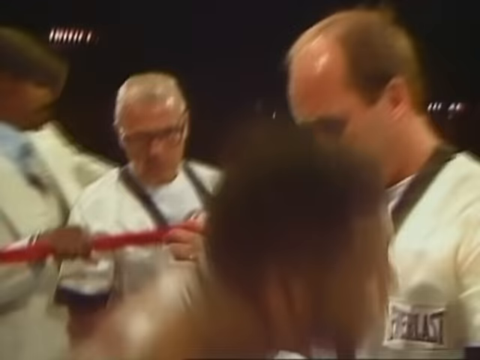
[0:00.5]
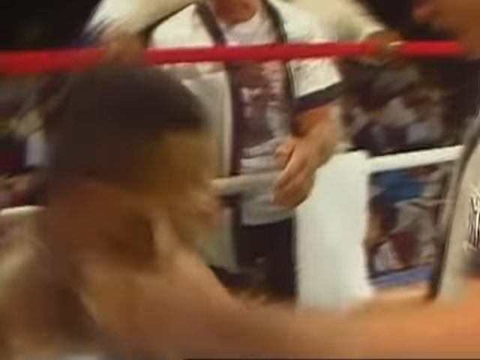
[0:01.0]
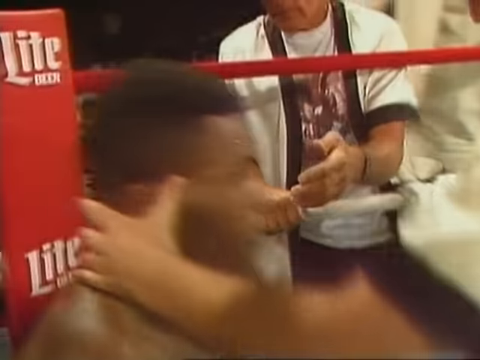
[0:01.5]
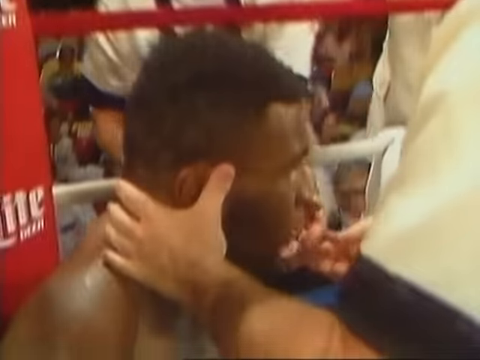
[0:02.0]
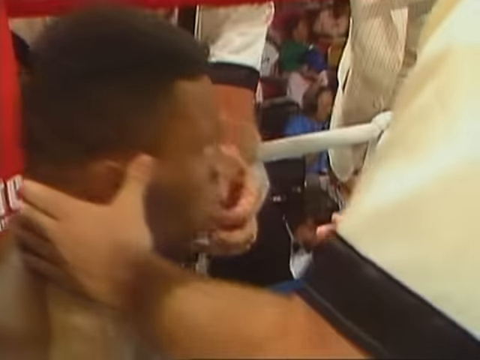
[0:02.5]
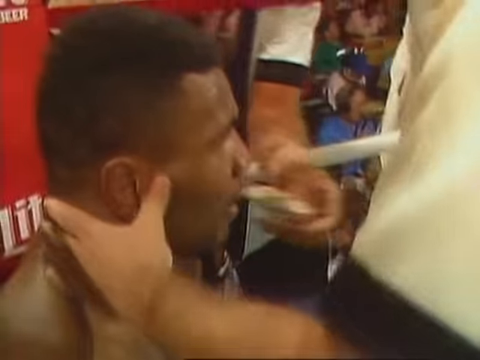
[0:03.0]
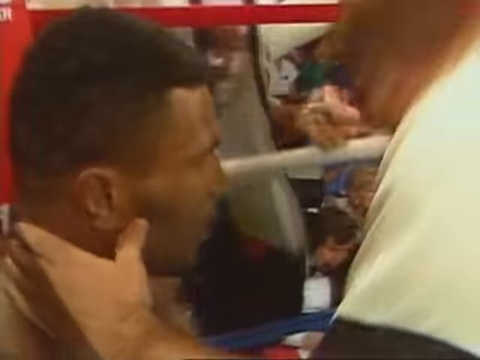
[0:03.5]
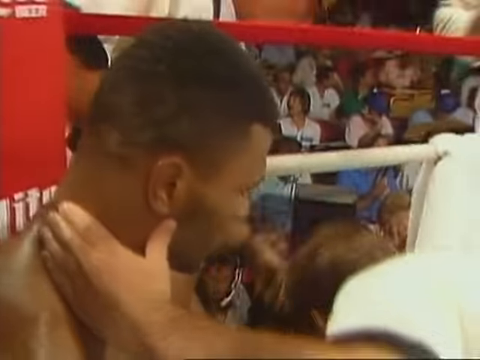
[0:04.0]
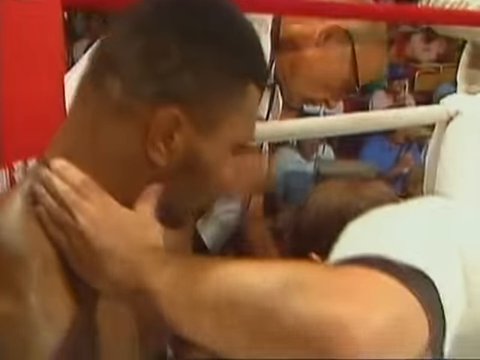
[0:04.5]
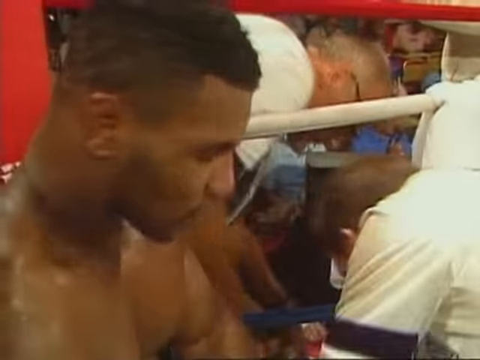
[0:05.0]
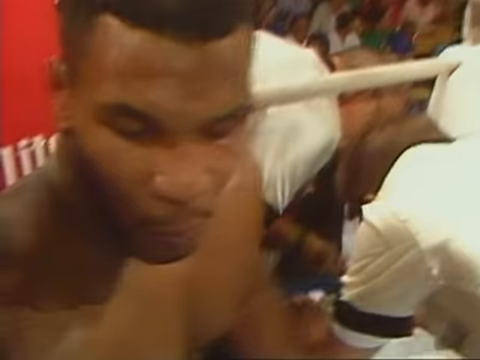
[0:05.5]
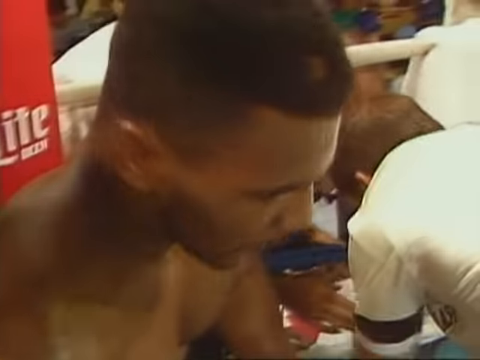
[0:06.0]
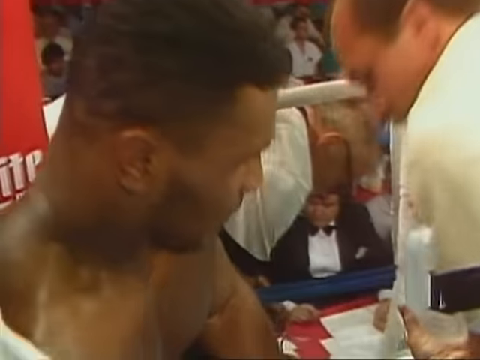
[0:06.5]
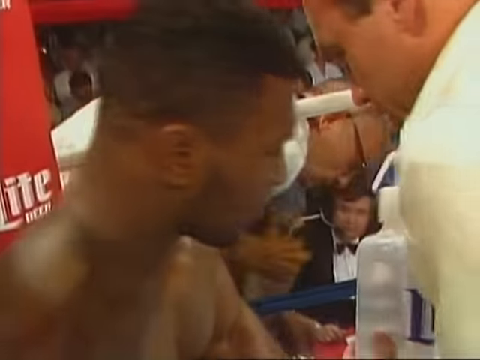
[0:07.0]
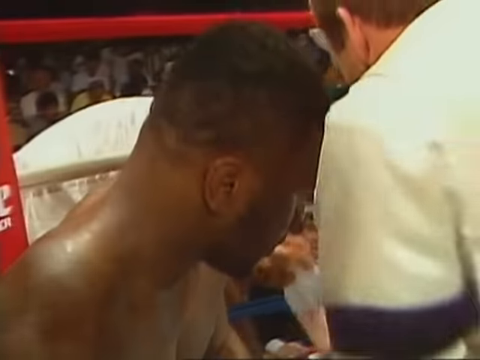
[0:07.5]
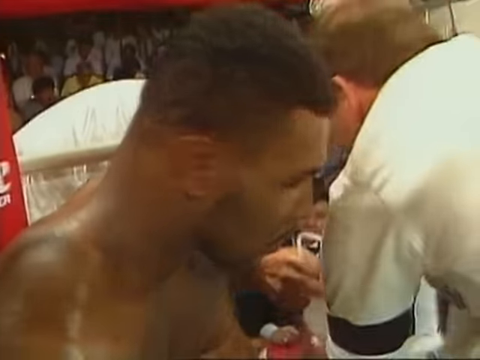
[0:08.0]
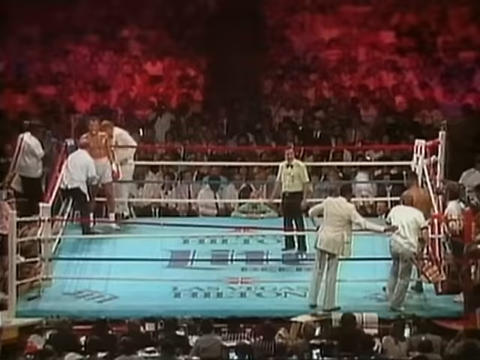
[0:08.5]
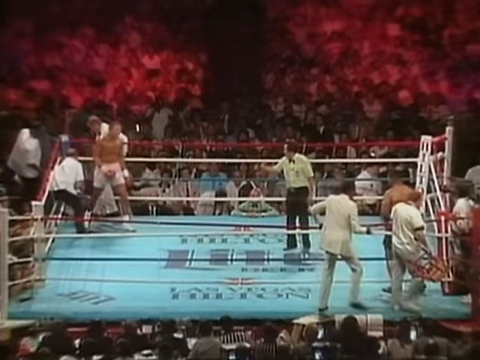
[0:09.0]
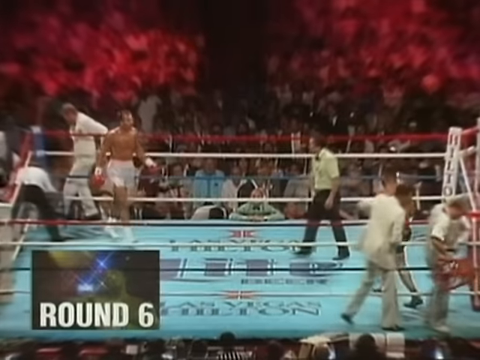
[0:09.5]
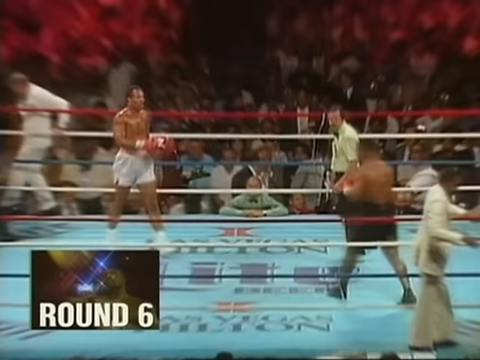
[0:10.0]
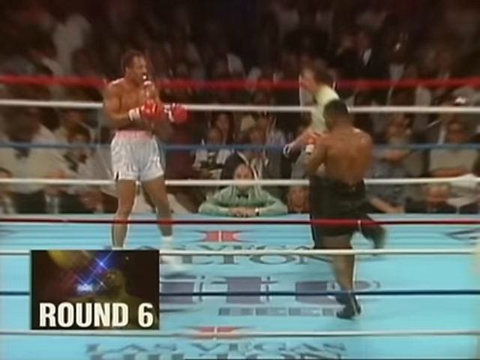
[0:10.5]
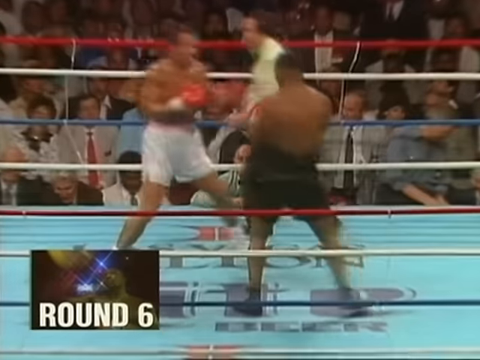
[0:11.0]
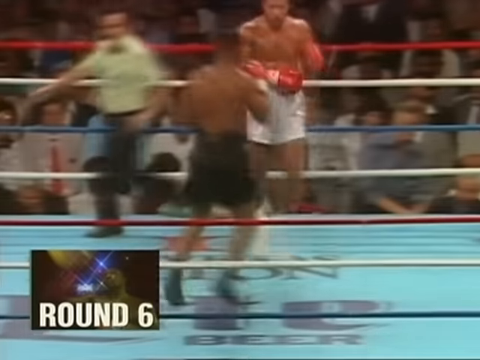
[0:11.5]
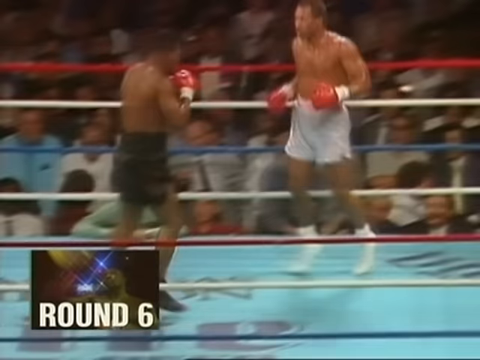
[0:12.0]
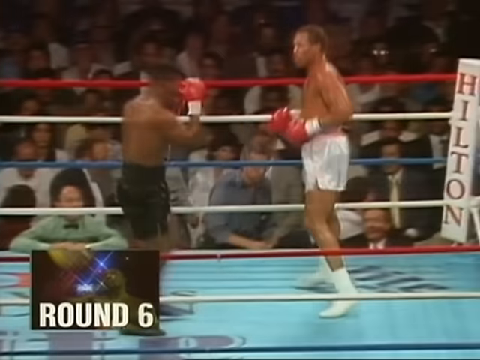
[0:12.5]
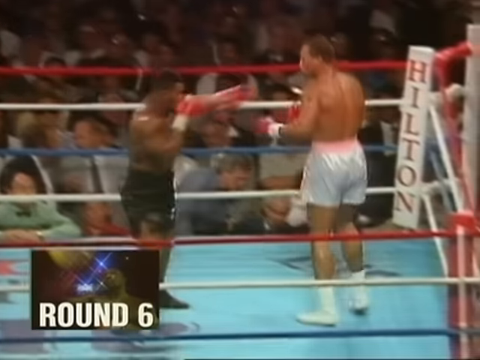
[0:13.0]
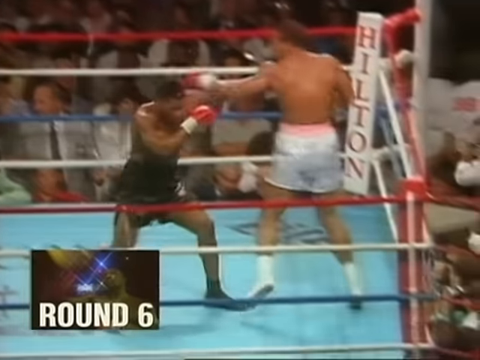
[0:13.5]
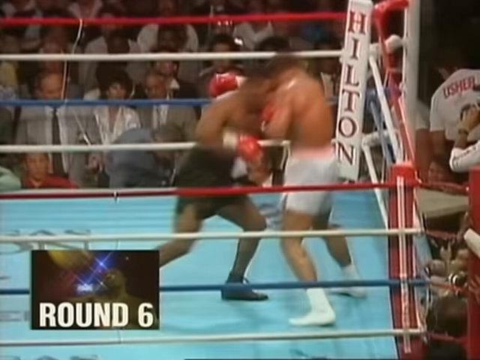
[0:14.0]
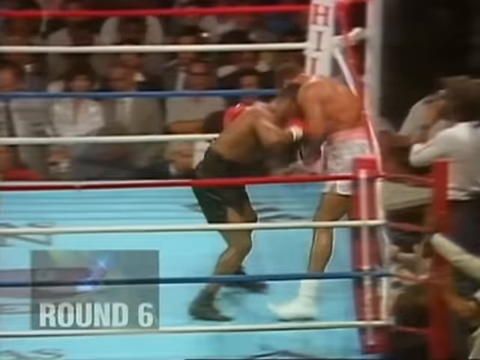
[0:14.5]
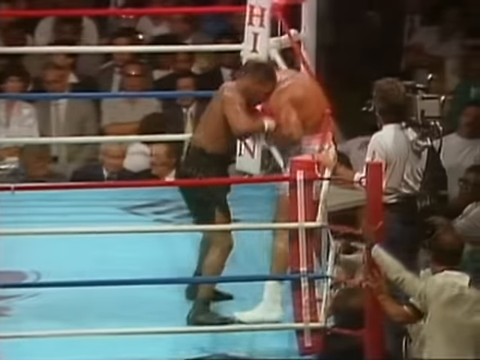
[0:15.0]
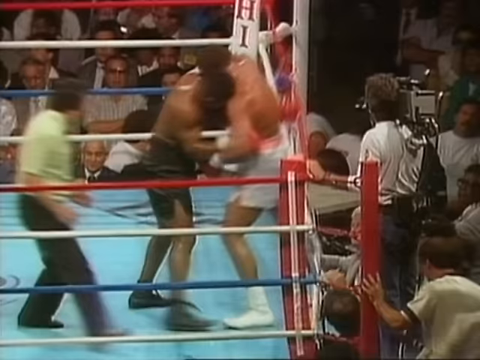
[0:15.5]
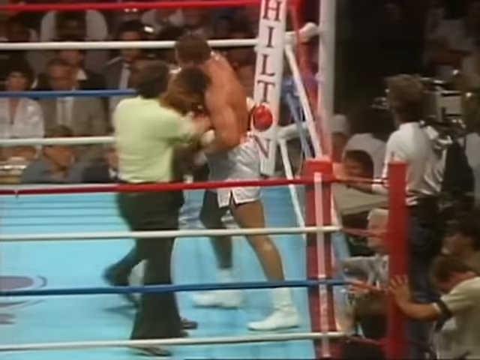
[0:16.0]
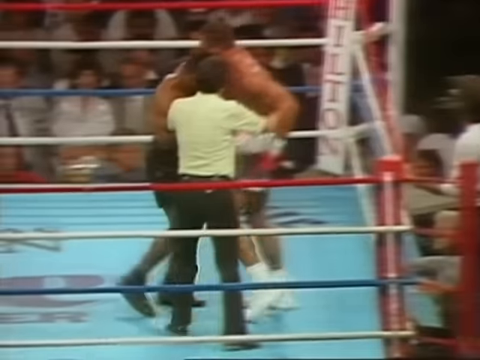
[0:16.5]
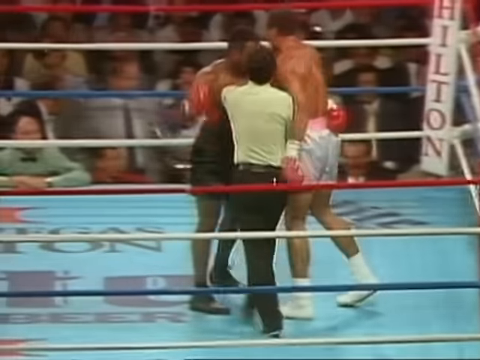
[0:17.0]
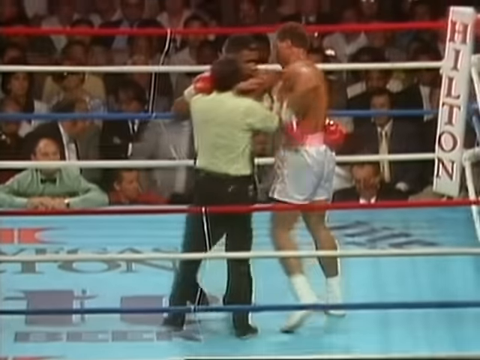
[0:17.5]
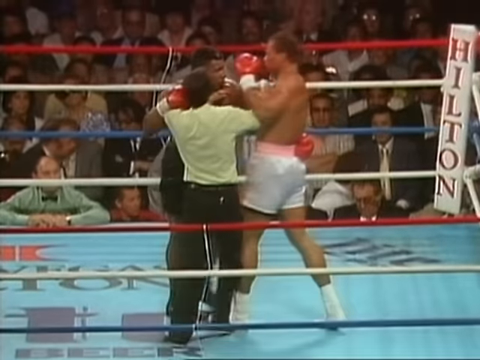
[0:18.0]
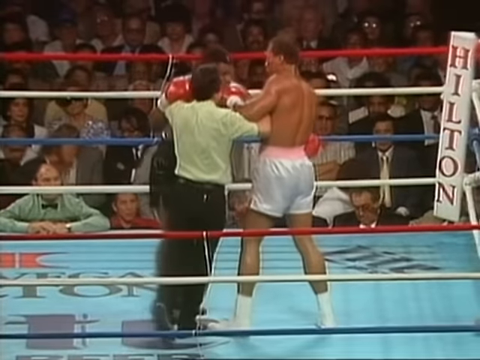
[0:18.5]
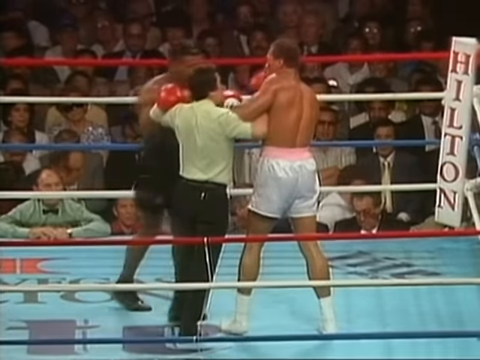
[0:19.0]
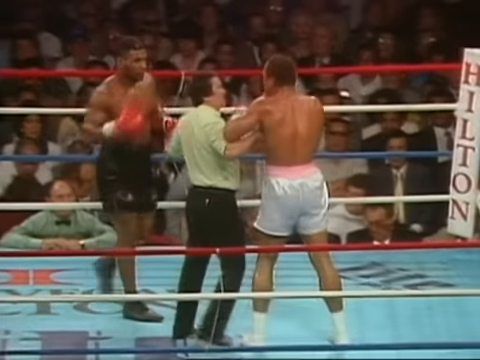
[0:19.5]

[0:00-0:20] A boxing match opens zoomed in on one corner. Red ropes are visible behind the boxer, along with a logo for light beer. The boxer, a Black male with dark hair, is sitting on a stool while his coaches tend to him; one coach's left hand is right by what appears to be the boxer's left neck. Several coaches are leaning in toward the boxer's right. The shot is very close, and the boxer looks like it might be Mike Tyson. He moves his head toward the camera and then looks down at what his coaches are doing. The view then changes to a high shot looking down at an angle, like a televised broadcast. Red and white ropes surround the ring, and the ring is kind of a teal color with a light beer logo in the center. The boxer in the upper left corner wears white trunks and red gloves, and the boxer in the lower right wears black trunks. The referee is wearing what looks to be a greenish shirt with black pants. Coaches from each corner go behind the ropes as the round begins; a square in the lower left-hand corner reads "round six". The boxers come to the center of the ring and circle, kind of clockwise. The boxer in black trunks has his gloves up in front of his face, while the other boxer has his down by his waist. Both boxers throw a couple of swings, one pushes the other into the ropes, and the referee breaks it up, leaving them at a standstill.